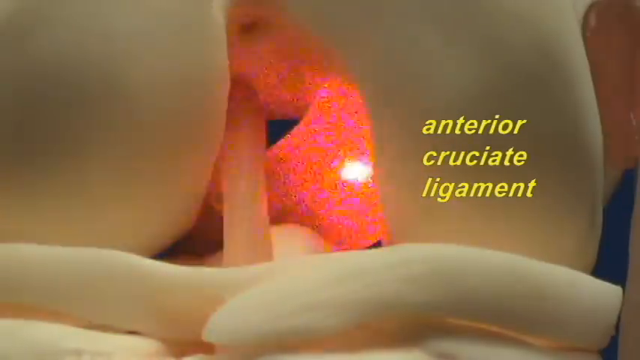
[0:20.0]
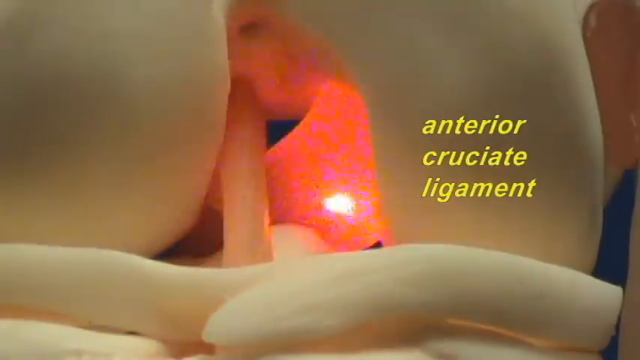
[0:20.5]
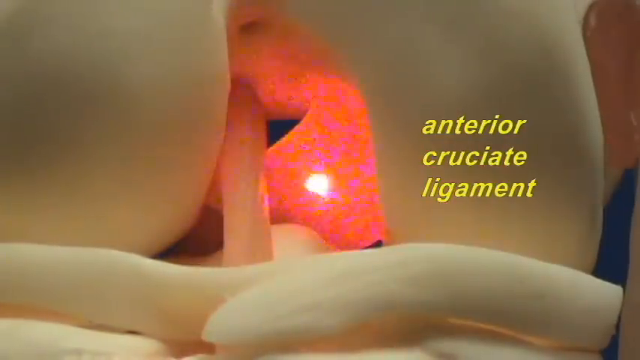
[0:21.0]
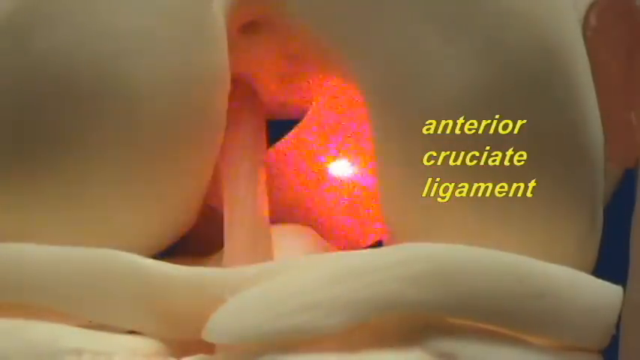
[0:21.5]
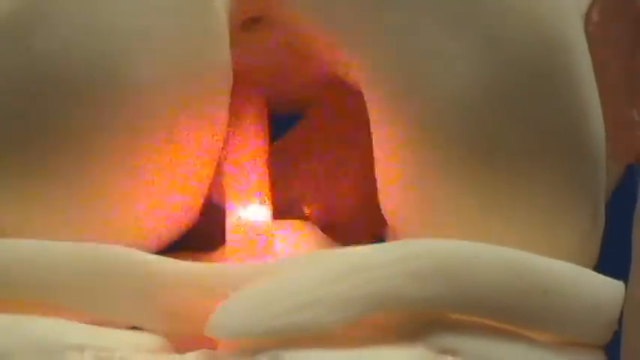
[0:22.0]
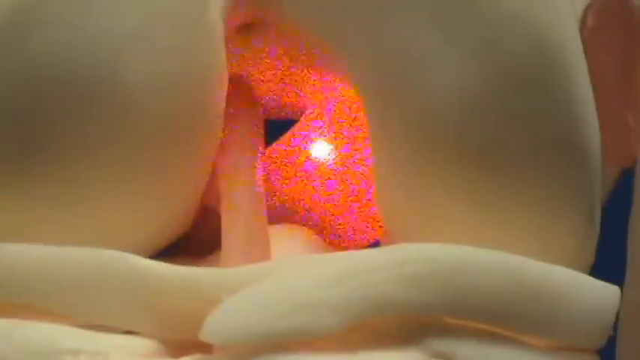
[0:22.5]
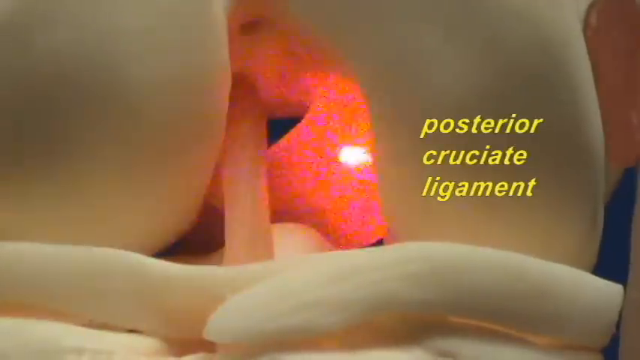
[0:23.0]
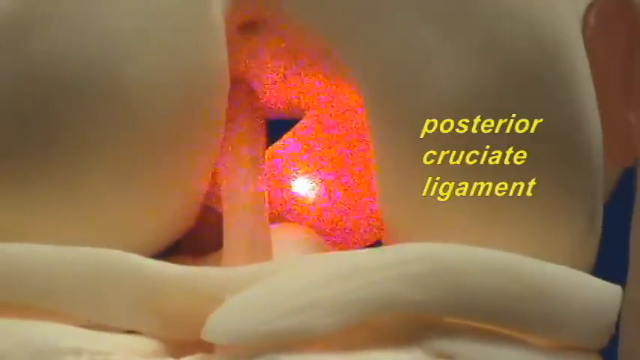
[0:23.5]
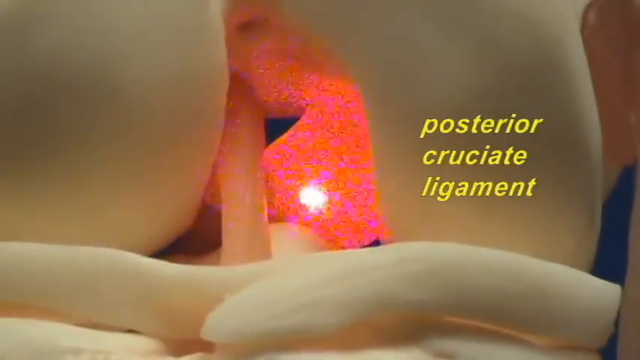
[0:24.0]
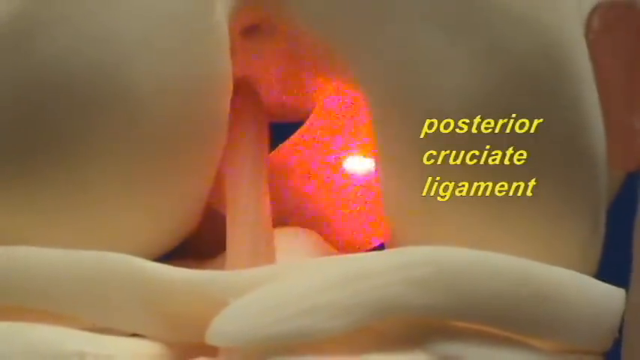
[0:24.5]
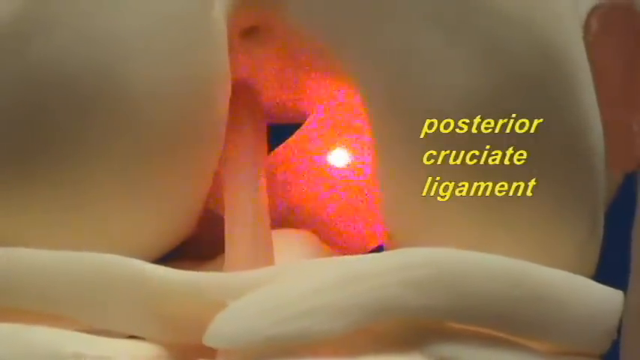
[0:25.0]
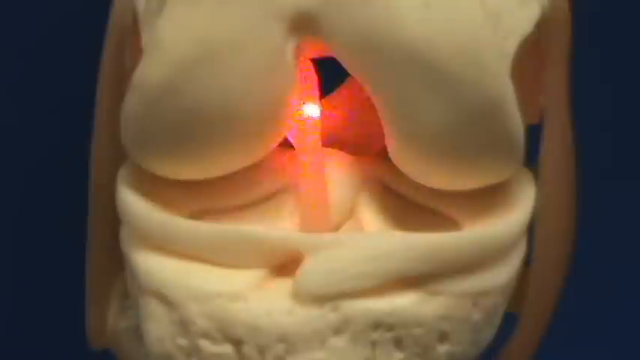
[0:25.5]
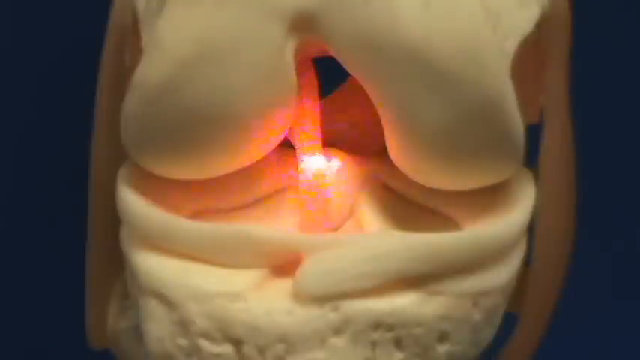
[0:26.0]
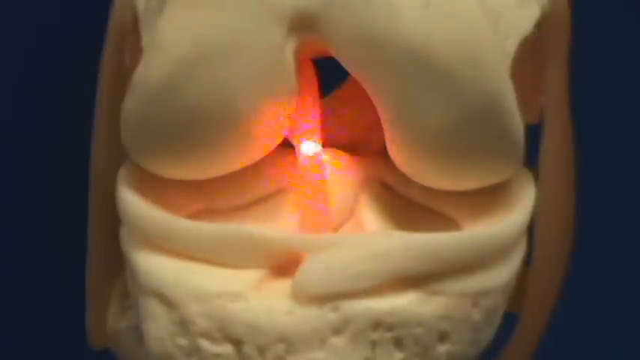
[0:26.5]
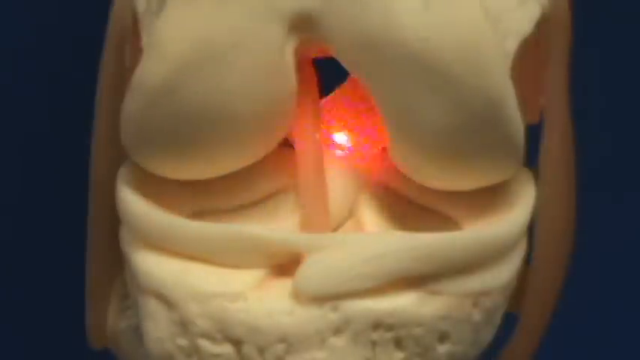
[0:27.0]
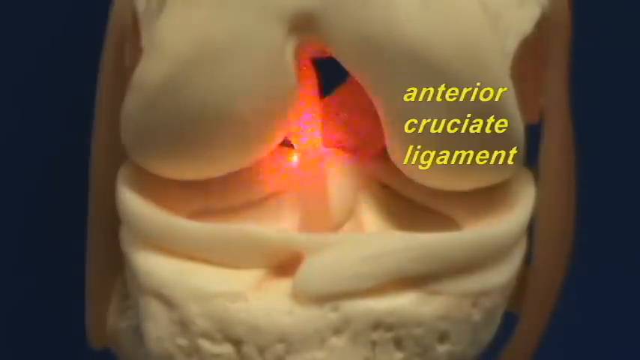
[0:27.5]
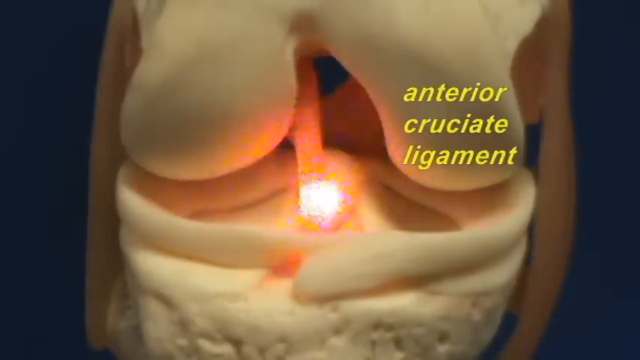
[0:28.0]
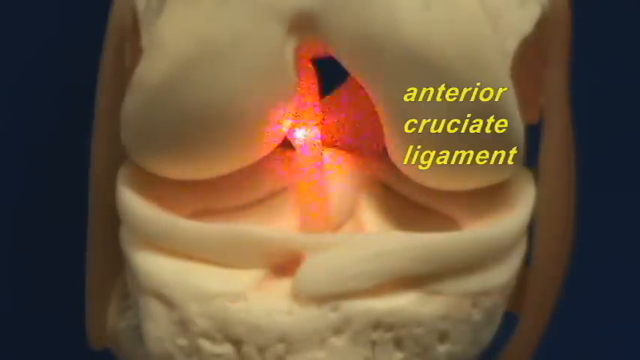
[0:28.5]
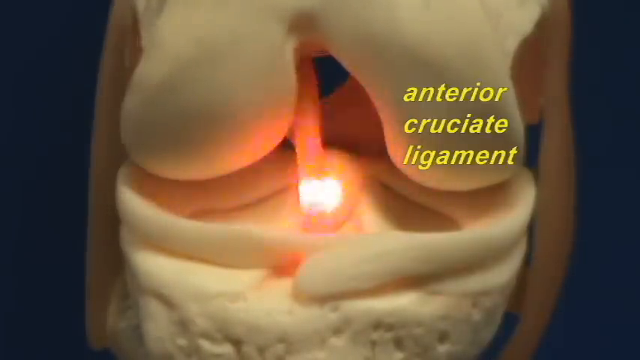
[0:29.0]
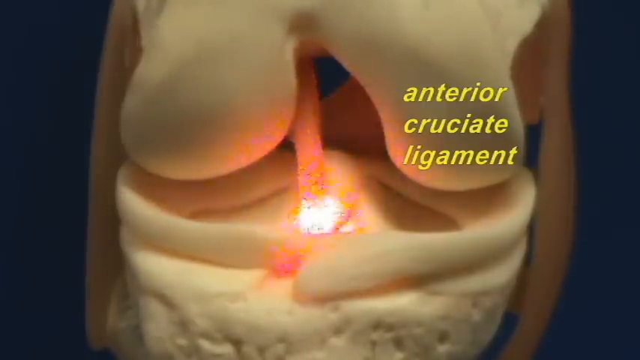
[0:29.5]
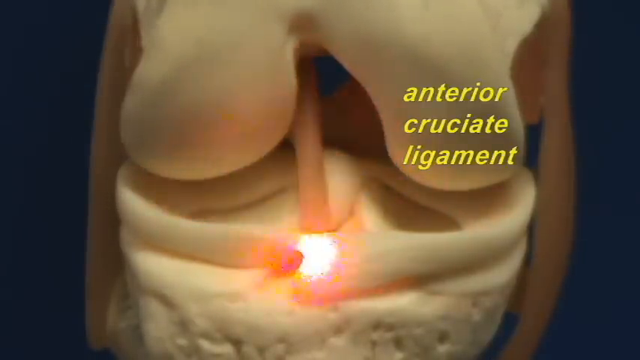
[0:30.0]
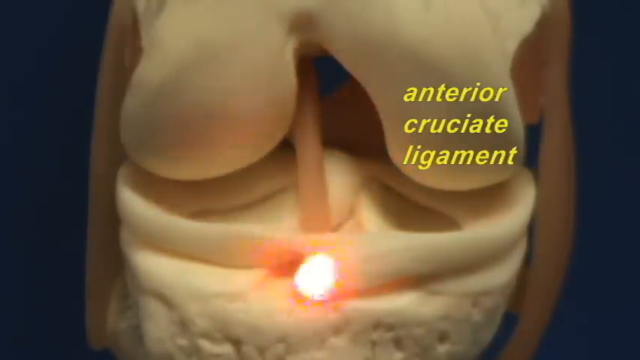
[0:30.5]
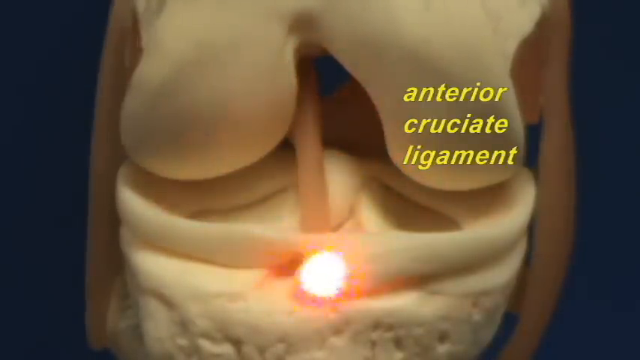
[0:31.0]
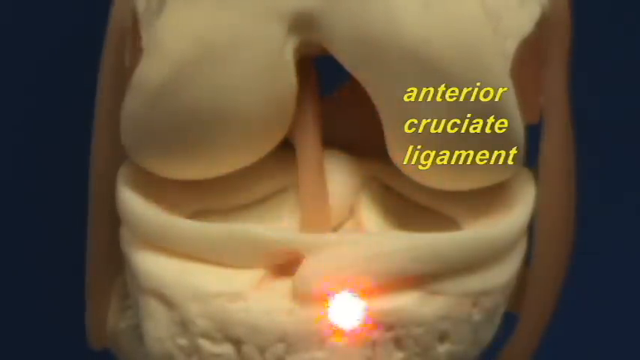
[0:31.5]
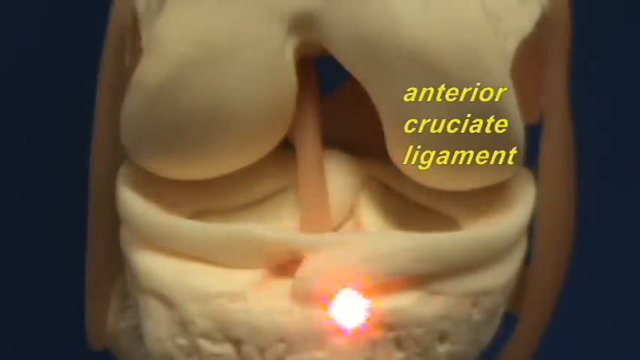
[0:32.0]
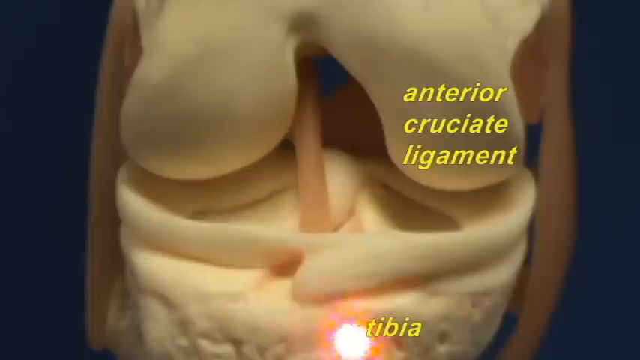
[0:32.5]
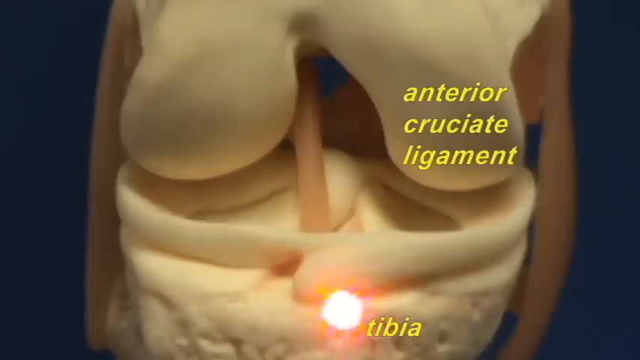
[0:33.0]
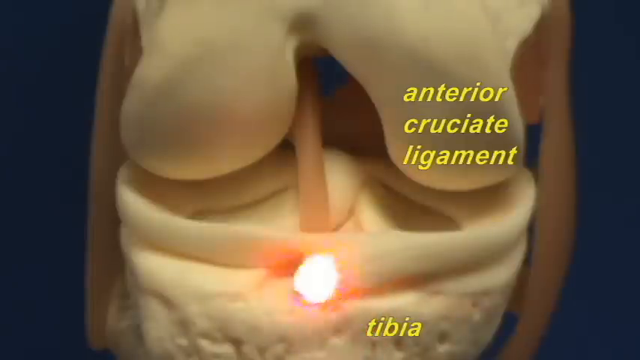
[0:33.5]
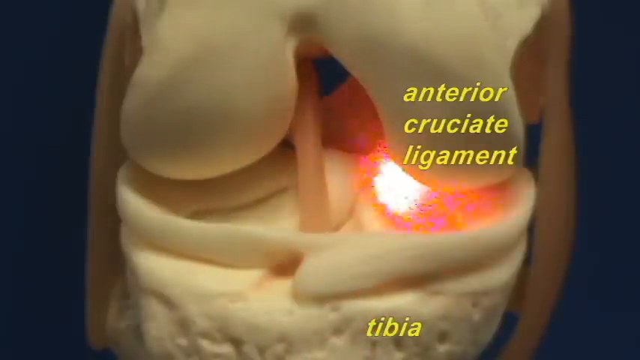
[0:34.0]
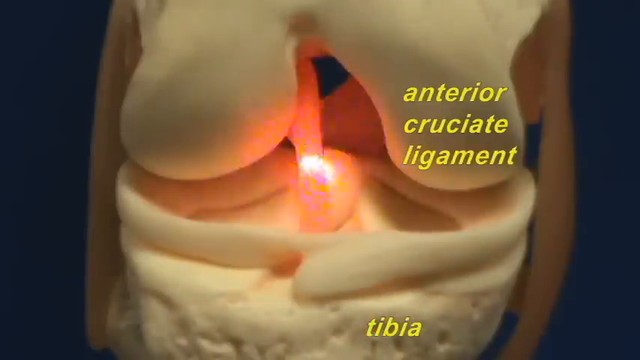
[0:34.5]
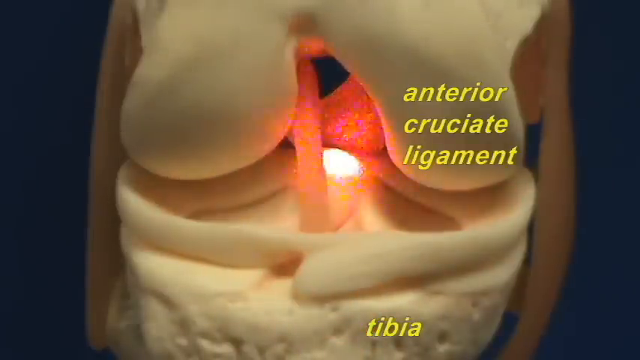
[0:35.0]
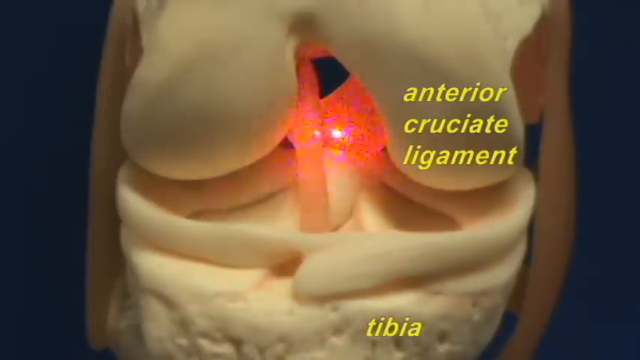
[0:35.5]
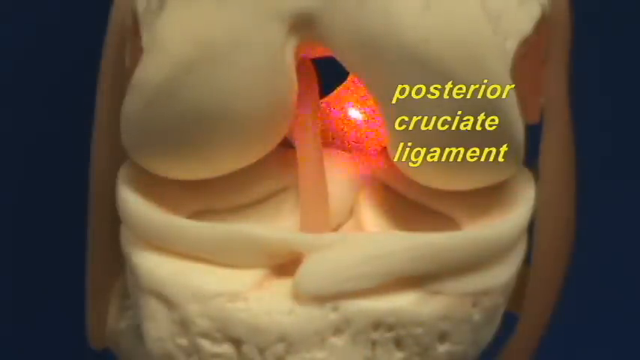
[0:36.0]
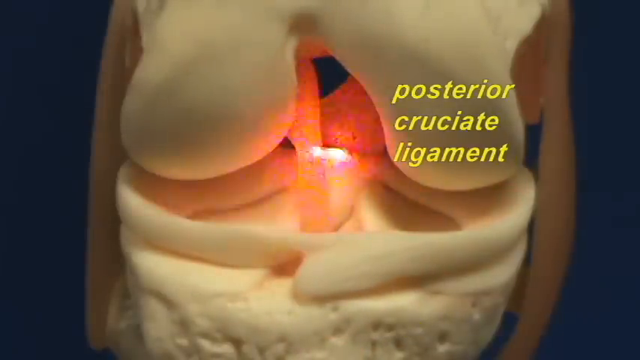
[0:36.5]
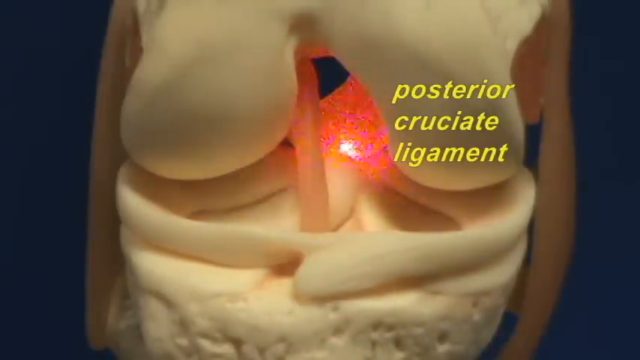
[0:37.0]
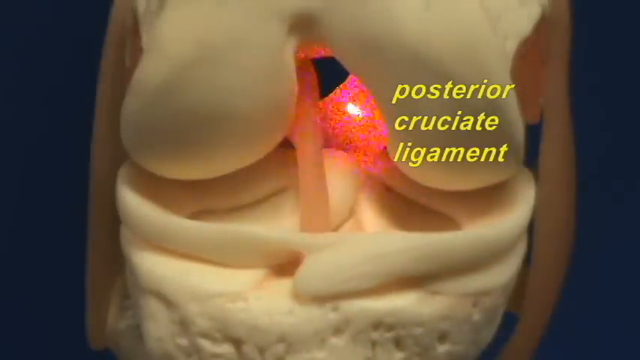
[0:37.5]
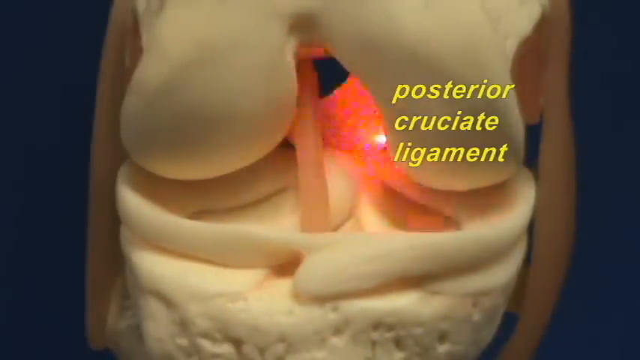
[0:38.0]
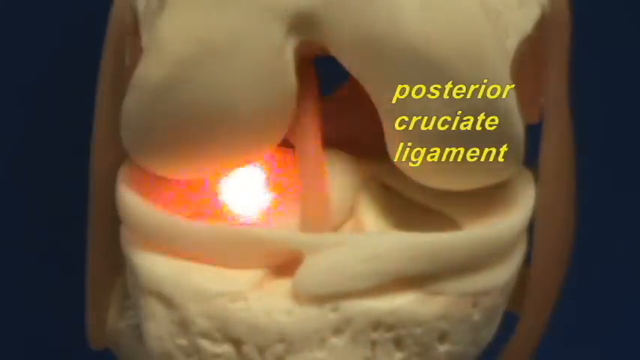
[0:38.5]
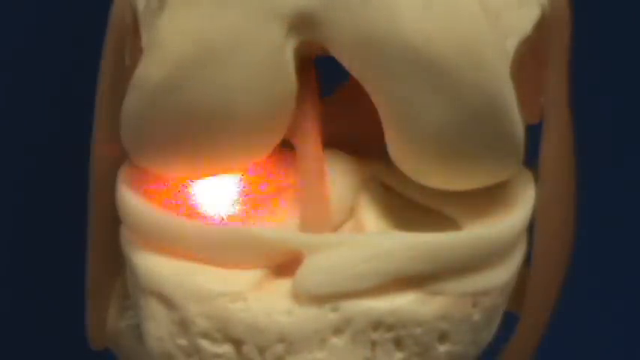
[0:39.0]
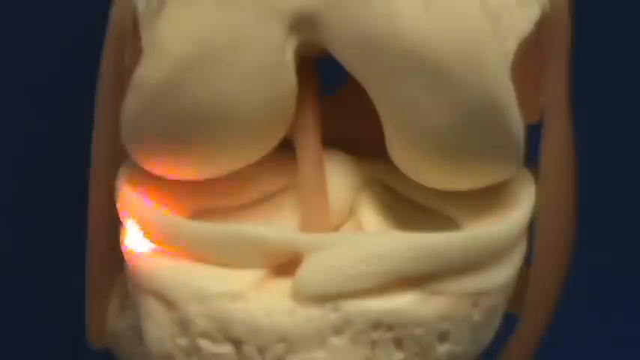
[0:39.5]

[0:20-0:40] The doctor uses the laser pointer to point at different areas of the three-dimensional knee model, namely the anterior cruciate ligament and the posterior cruciate ligament. The view zooms out a bit while he is still pointing at the anterior cruciate ligament. He then points to the top part of the tibia and briefly to the lateral cruciate ligament, or at least the part of it visible in the model at this point. The pointer stays on each area for only a few seconds.